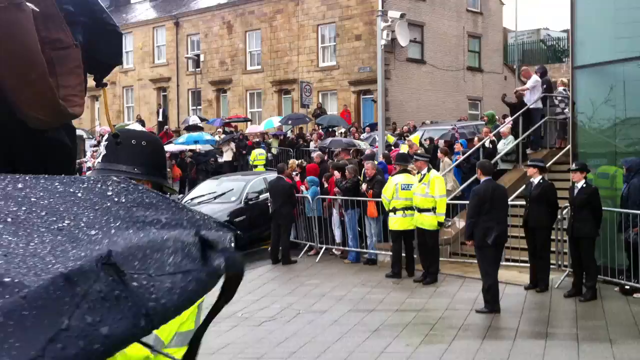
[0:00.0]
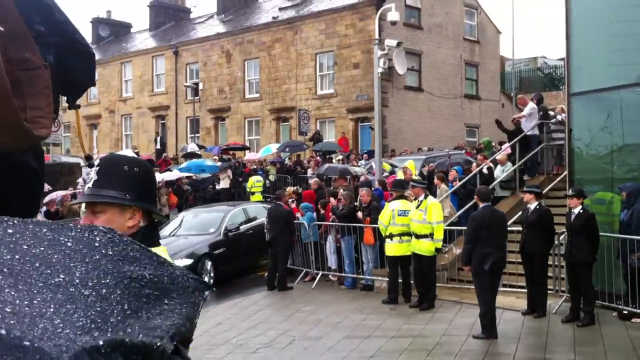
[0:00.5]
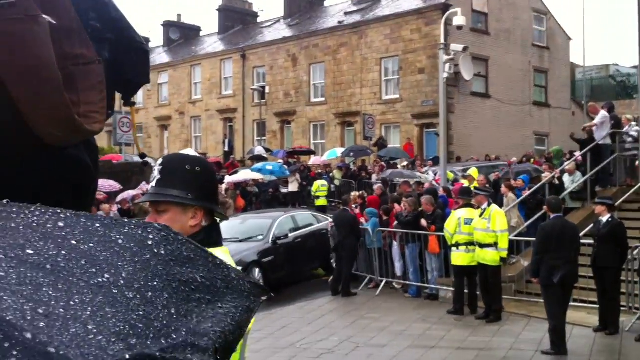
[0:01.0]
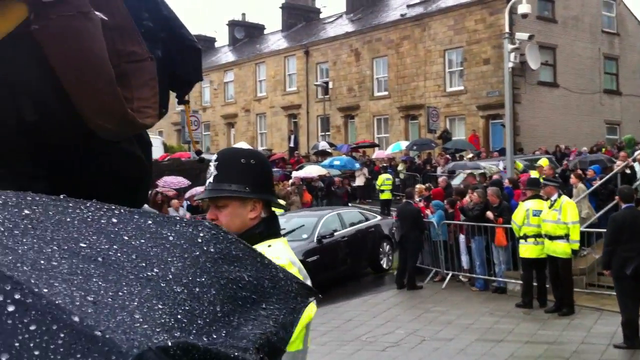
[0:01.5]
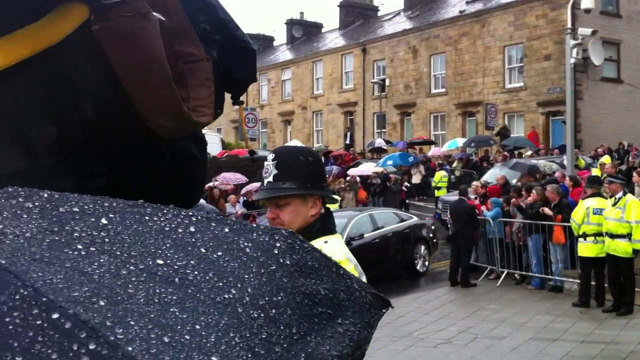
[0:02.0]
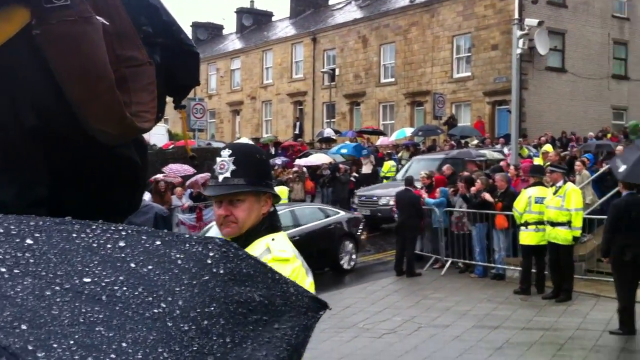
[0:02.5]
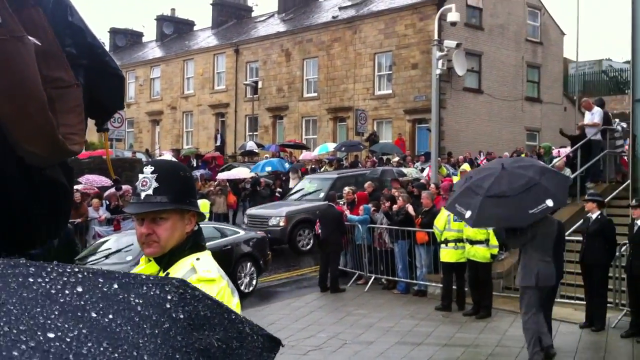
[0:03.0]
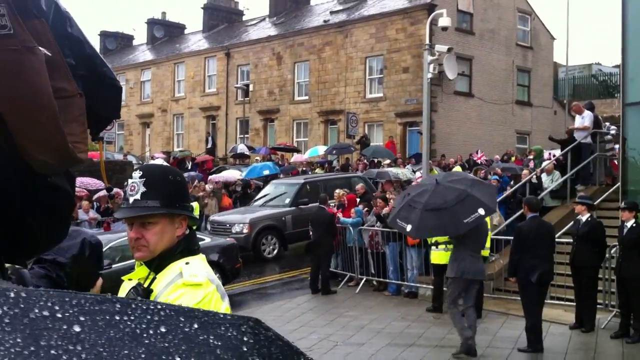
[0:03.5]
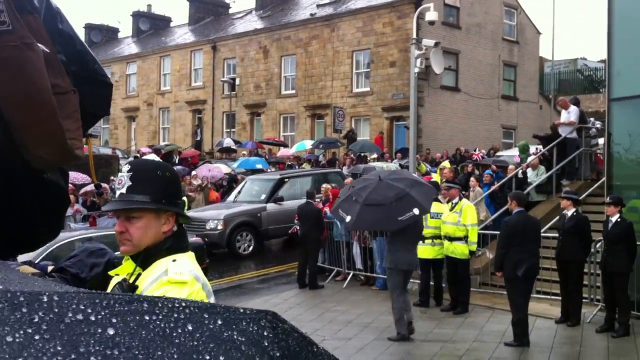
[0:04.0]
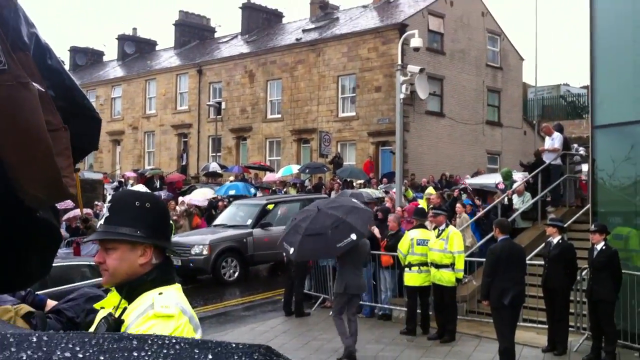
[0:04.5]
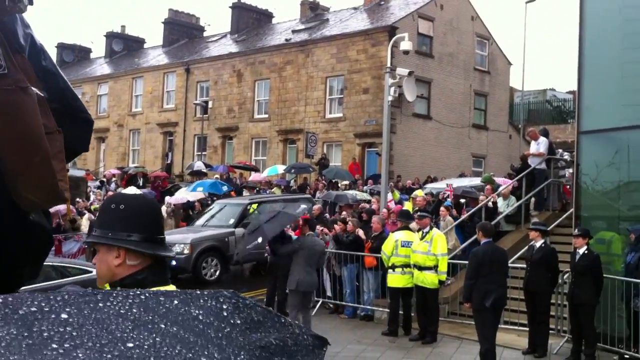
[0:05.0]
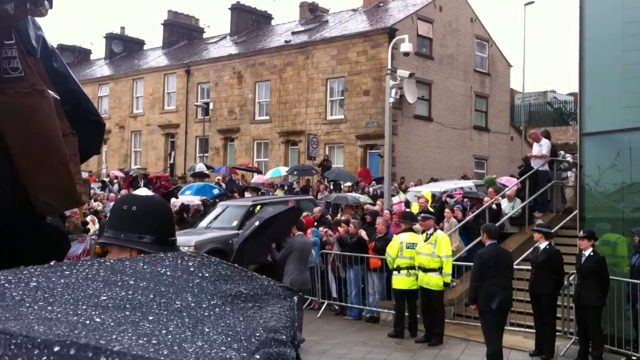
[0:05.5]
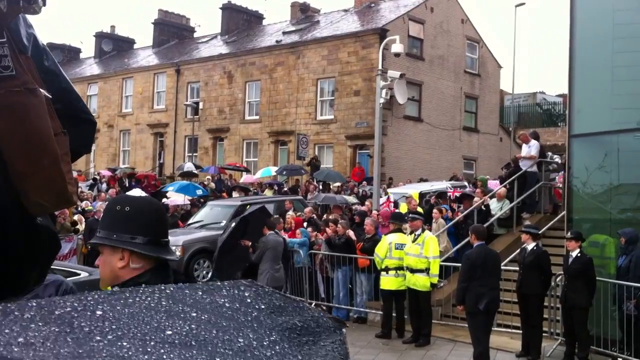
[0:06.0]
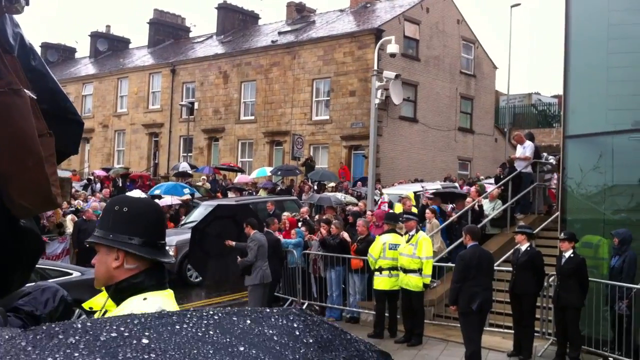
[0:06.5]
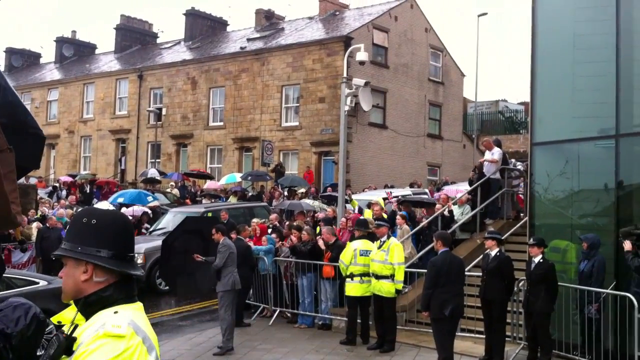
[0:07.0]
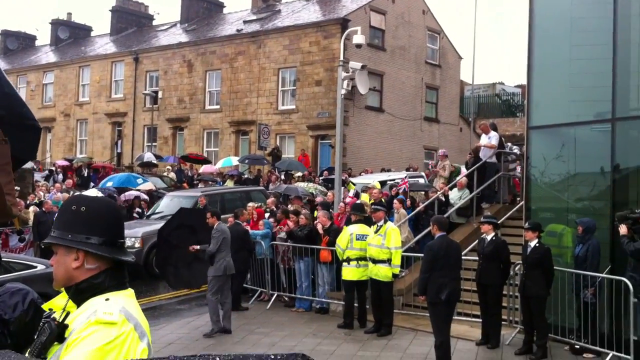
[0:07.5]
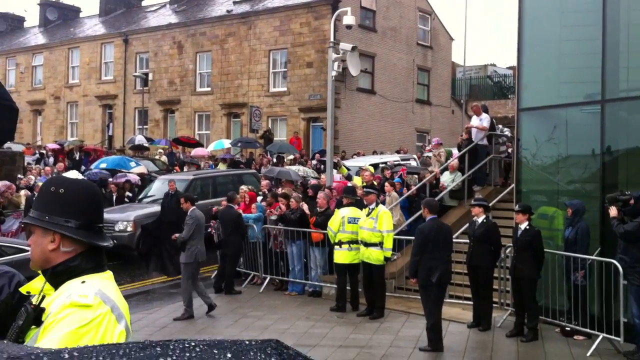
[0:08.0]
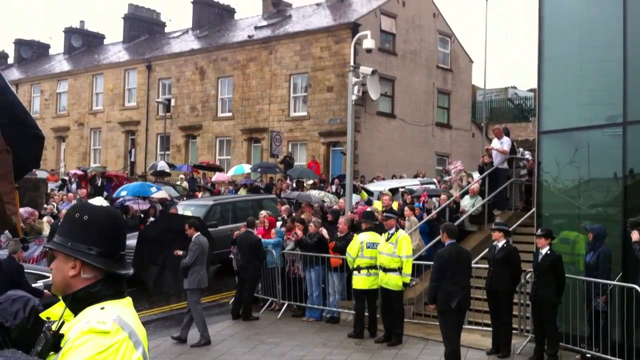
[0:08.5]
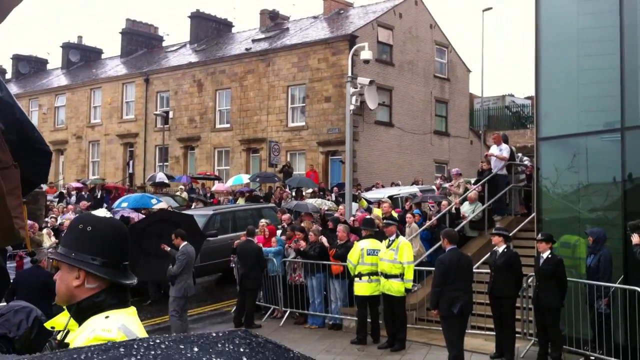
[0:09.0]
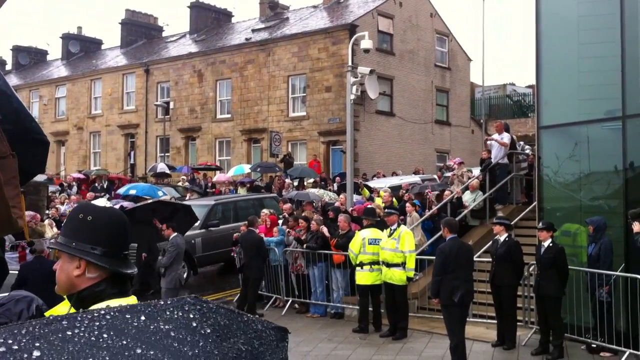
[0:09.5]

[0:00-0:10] A news story set in England, recognisable by the police officers in high-vis and the buildings. Lots of police are standing about, along with lots of pedestrians. It is a rainy day, so they all have their umbrellas up, and some cars are kind of driving down a road. There is a glass building on the right. In the background there is a row of bricked terraced houses and some stairs. Some of the police officers are in full black uniform with hats on, while others wear big high-vis jackets. A saloon car passes, followed by a kind of Range Rover style car, and then the door starts to open and people walk up to these cars with umbrellas.